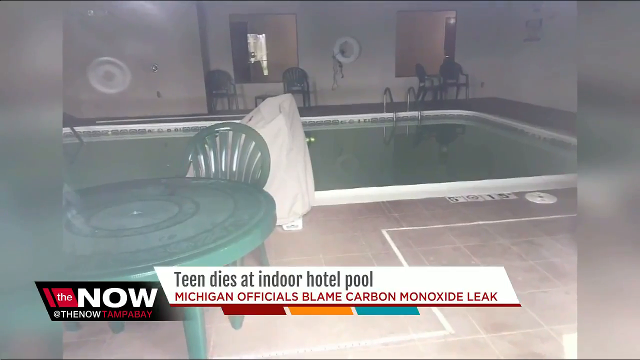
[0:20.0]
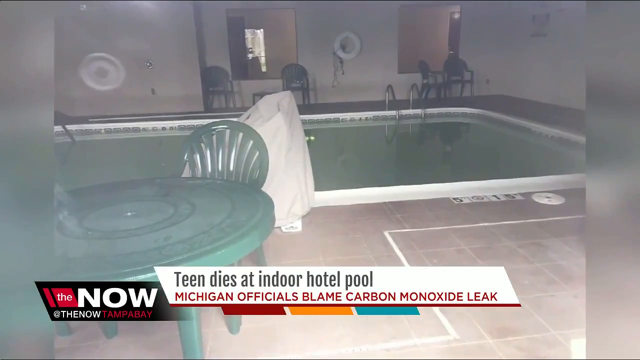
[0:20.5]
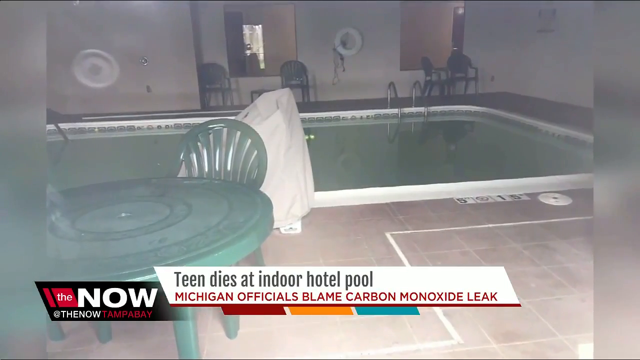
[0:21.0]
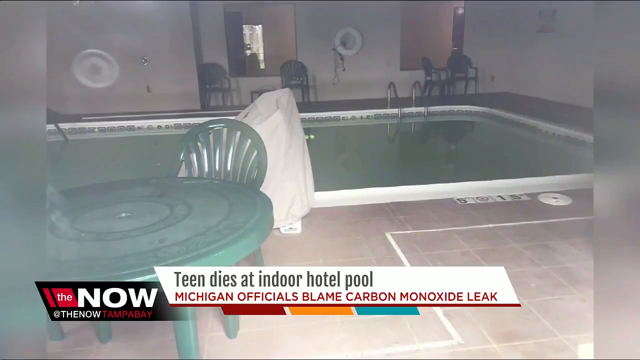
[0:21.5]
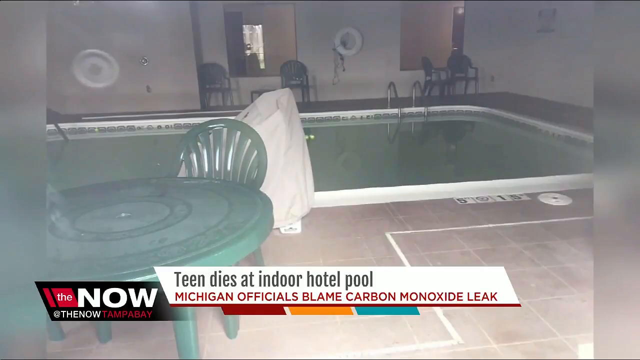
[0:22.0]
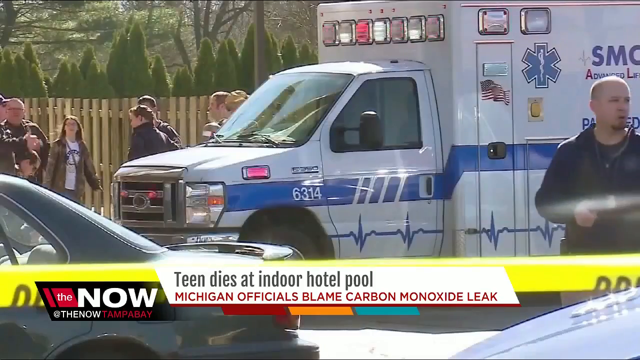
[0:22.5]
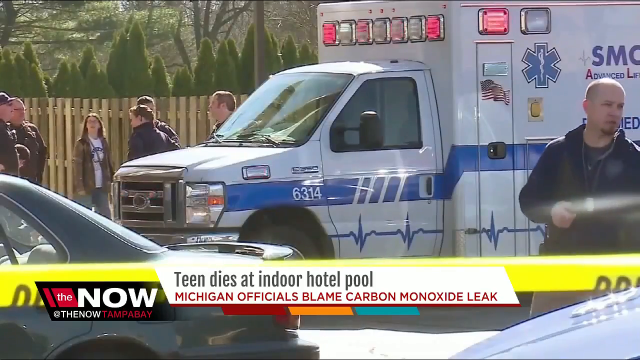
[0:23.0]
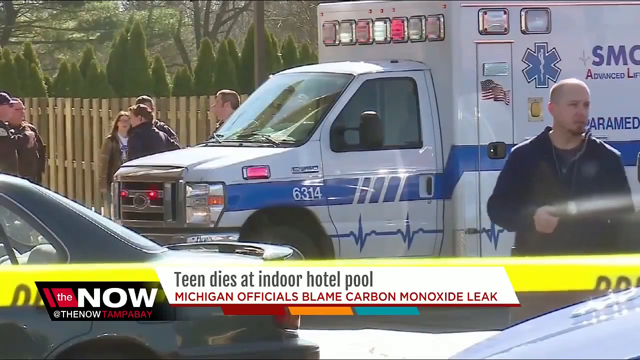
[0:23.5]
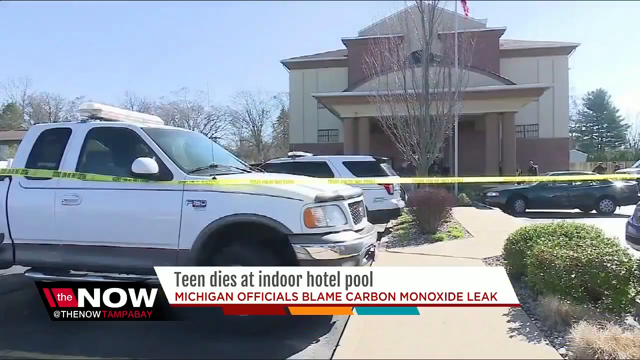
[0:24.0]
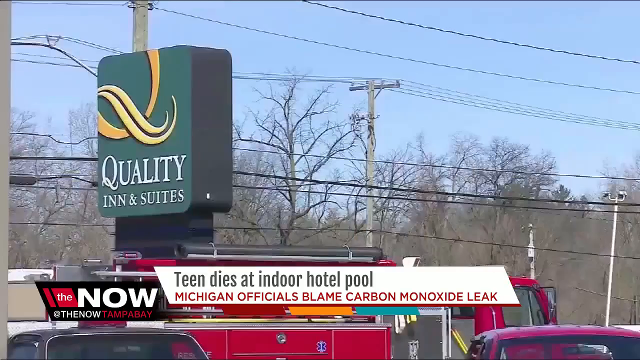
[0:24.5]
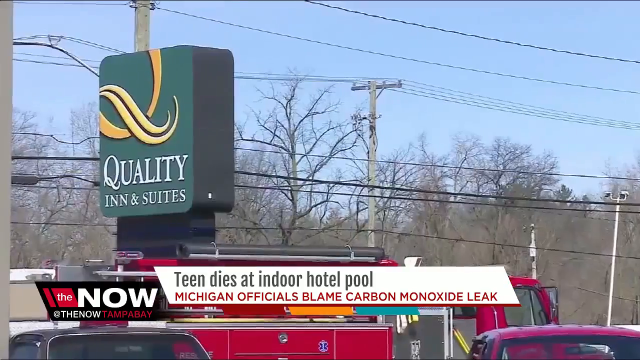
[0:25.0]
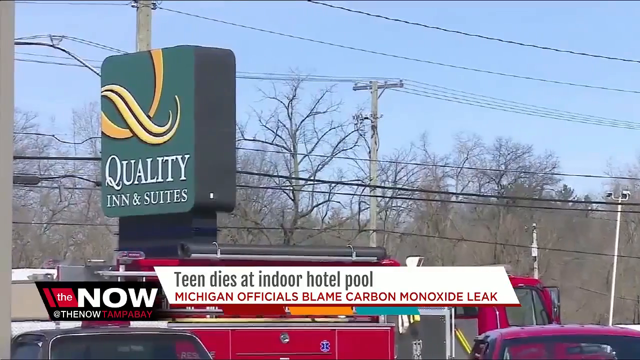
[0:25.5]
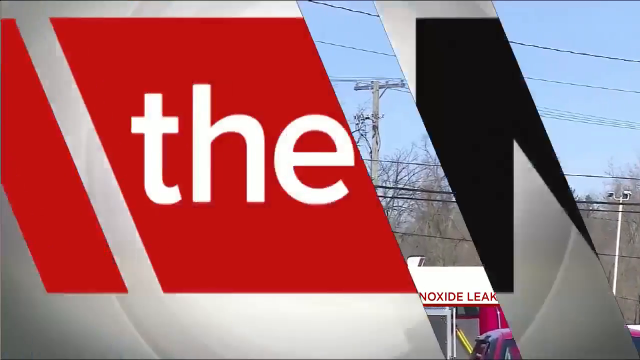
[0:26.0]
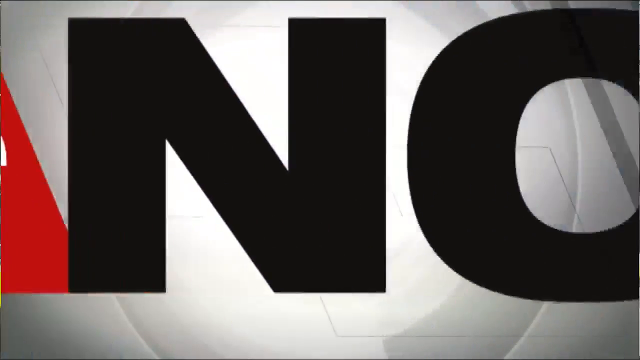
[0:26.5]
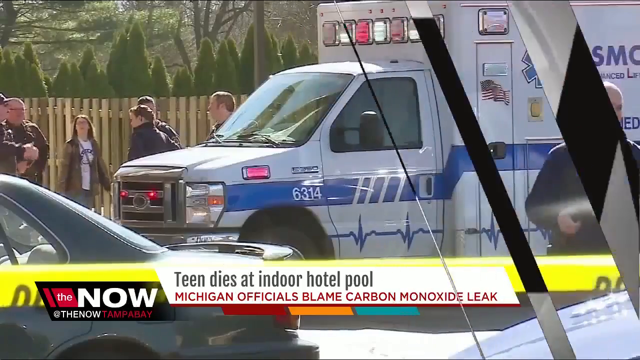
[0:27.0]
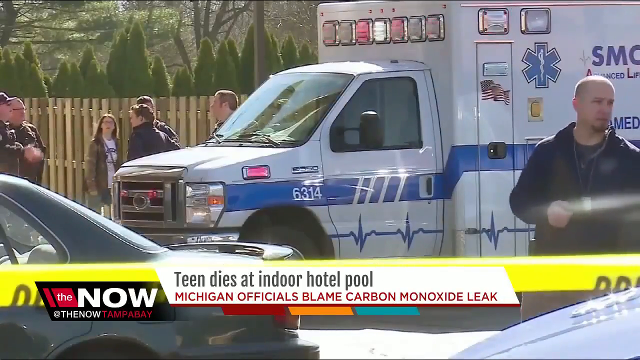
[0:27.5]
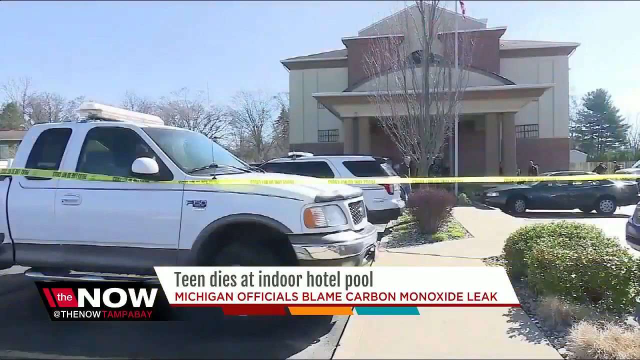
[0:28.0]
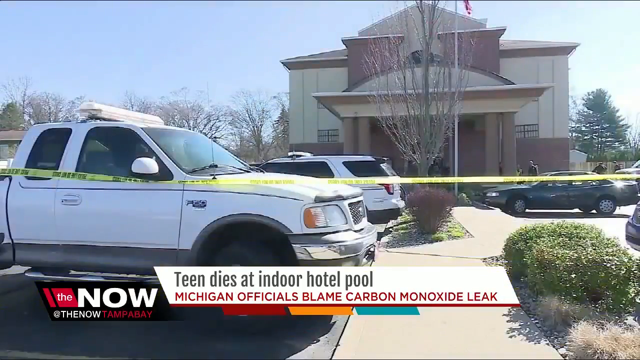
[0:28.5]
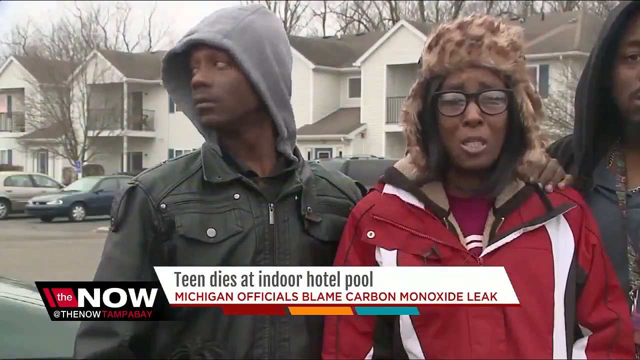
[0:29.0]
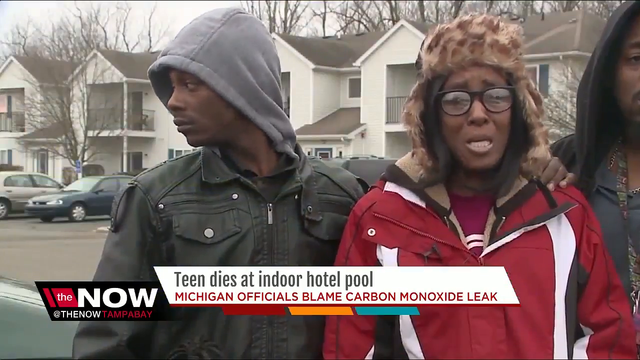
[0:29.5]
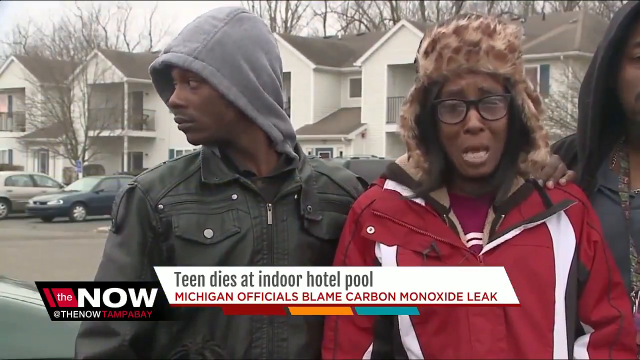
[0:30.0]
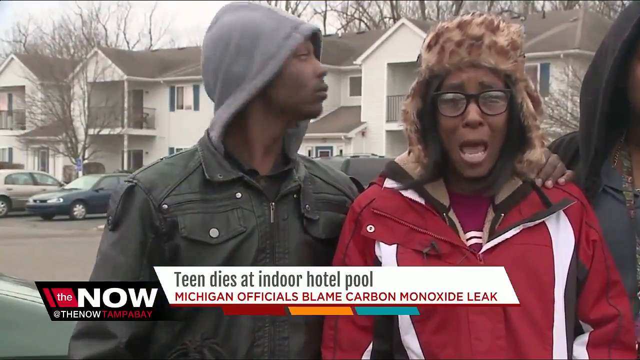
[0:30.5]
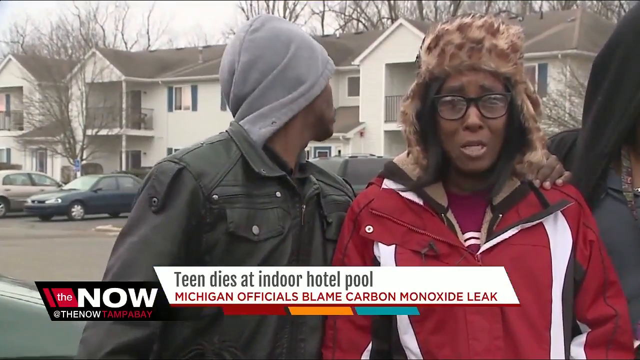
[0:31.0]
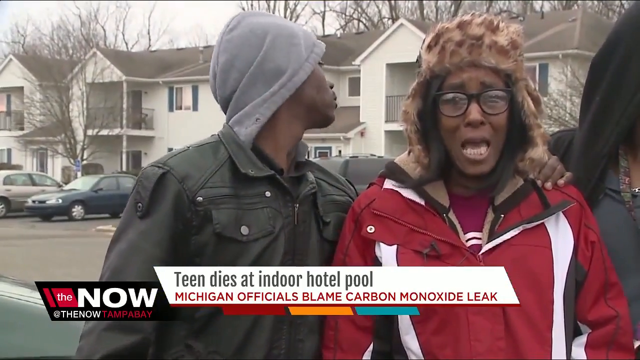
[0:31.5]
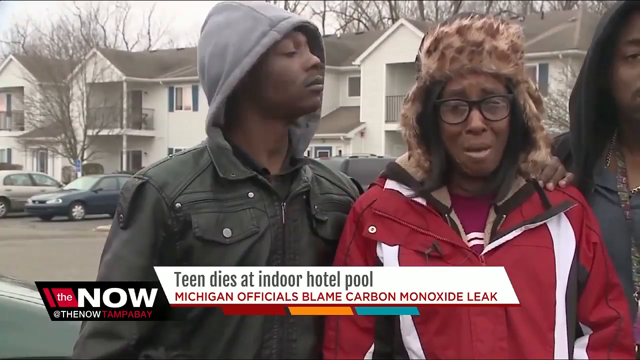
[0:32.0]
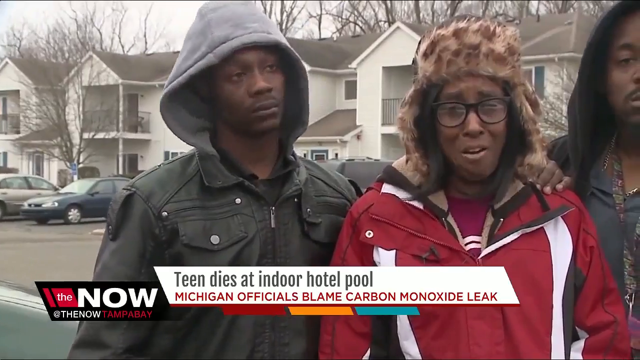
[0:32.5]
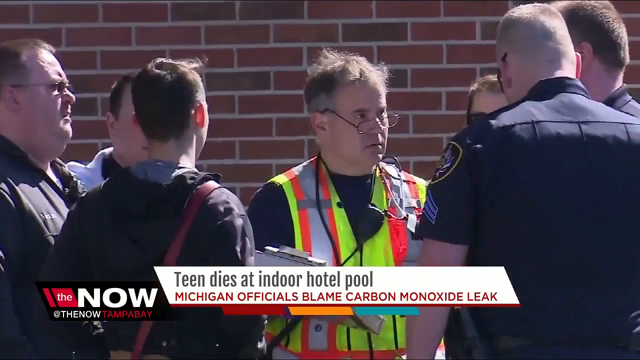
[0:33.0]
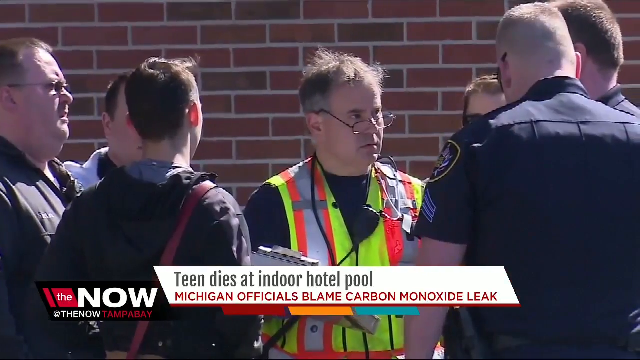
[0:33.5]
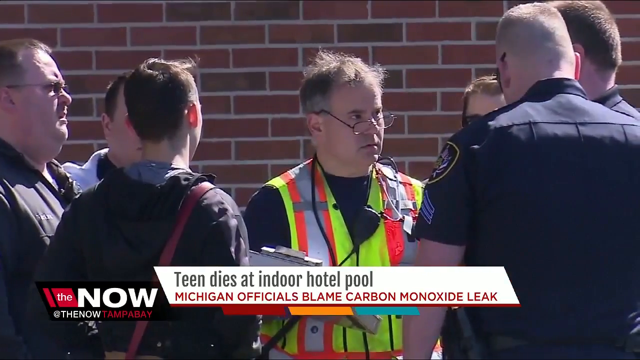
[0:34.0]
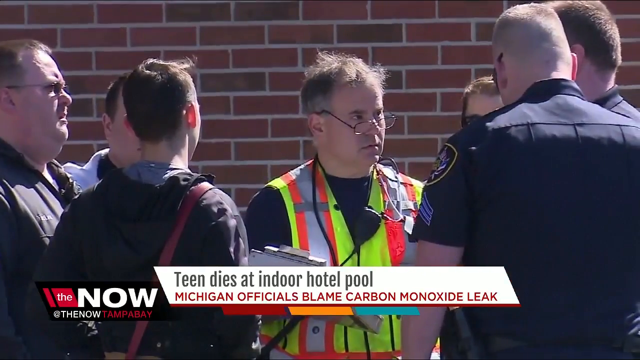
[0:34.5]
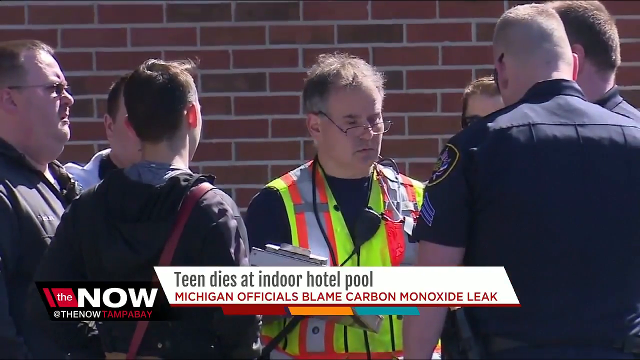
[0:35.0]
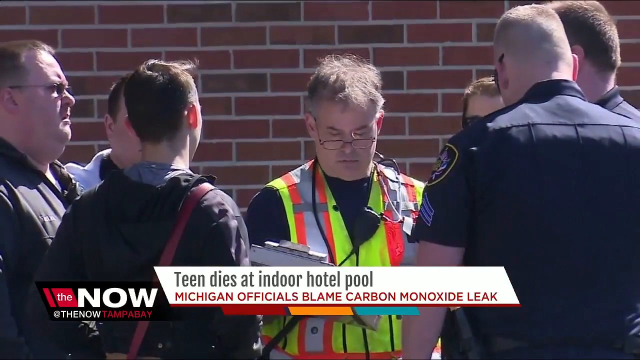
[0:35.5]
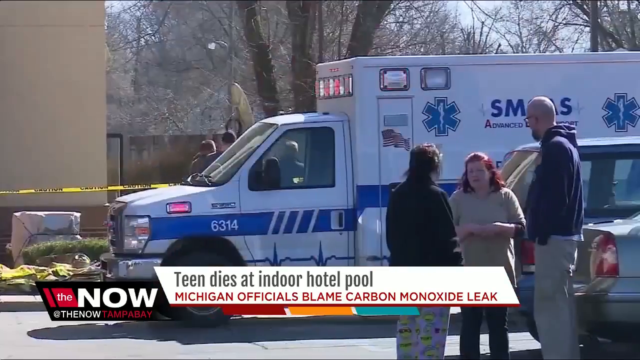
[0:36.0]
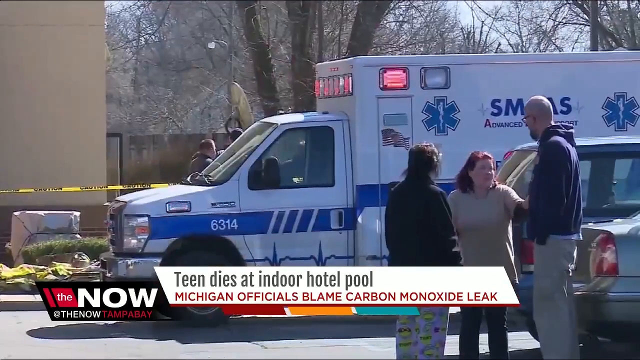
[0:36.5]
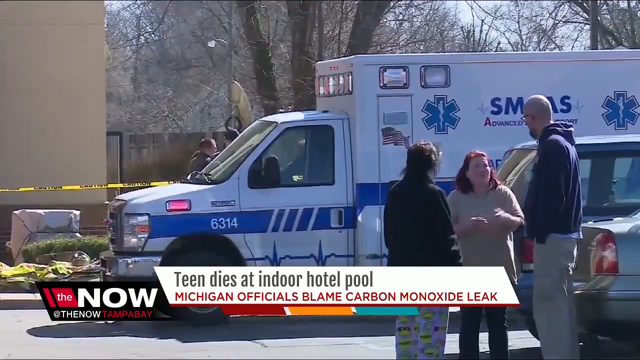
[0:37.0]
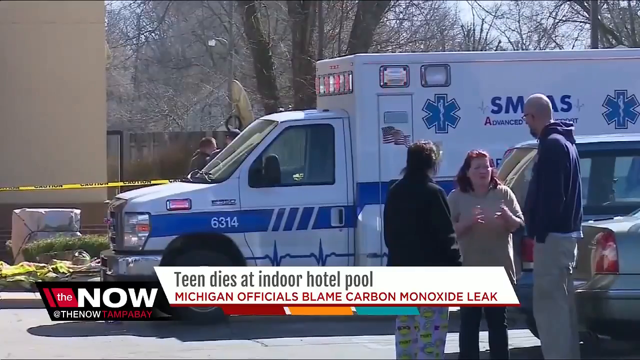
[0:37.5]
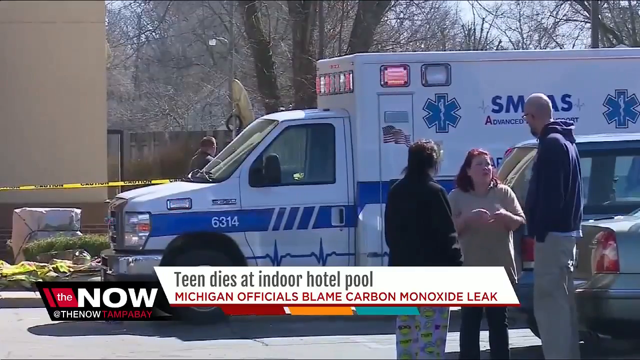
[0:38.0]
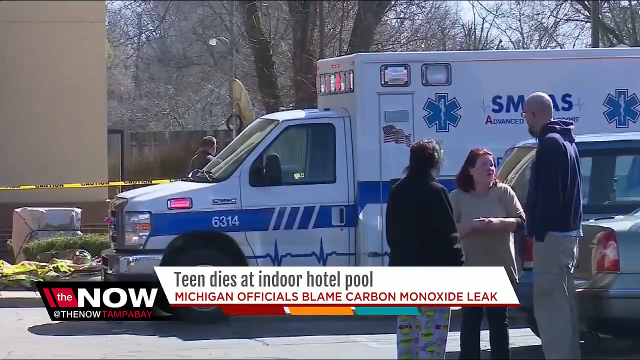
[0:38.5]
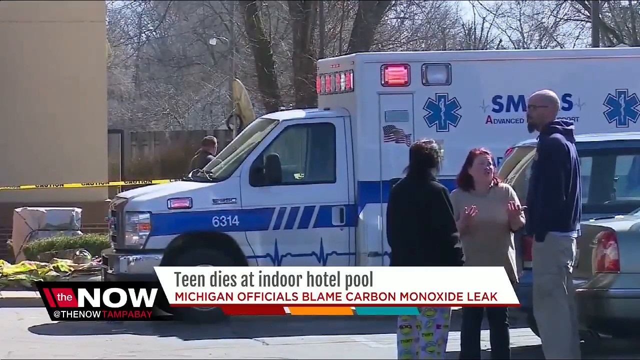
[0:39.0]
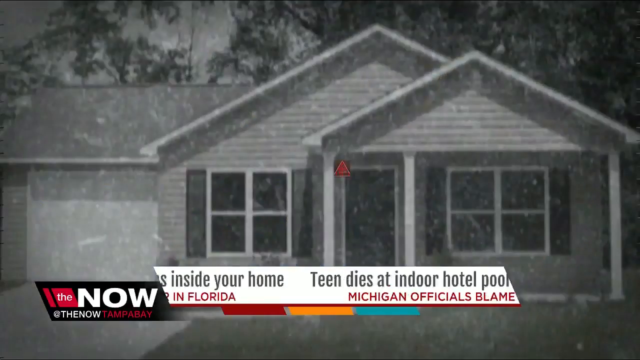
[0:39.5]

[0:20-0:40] A pool with a white barrier around it and grayish flooring is shown. A green plastic table and chairs are on the left, with a white towel over what is possibly a white chair just behind it, and more green chairs off in the background. There appear to be two mirrors on the left and right sides, and a white tube hangs on a white wall. The water is a bit green, and clear metal poles for entering the pool can be made out on the right side. The caption at the bottom, in grayish lettering on a white background, reads "teen dies at indoor hotel pool", with red lettering underneath reading "Michigan officials blame carbon monoxide leak". The colouring beneath goes red, orange and teal blue. To the bottom left is a black box with a red box inside holding the white word "the"; beside it, in a larger white font, is "now", with "at the now" in white below and "Tampa Bay" in red beside it. The next scene shows a white and blue striped ambulance with six people in the background. Behind them is a brown picket fence with green trees and gray branches. A car is just off to the side of the ambulance, there is yellow police tape, and a white man in a dark blue top walks past on the right side. The scene then shifts to police vehicles, some of them white F-150 pickup trucks. In the background is a teal and brown building with two grayish columns holding up the front section. There are gray cars, green bushes, a teal concrete sidewalk in the middle, and a tree with bare brown branches, with a reddish bush in front of it. The next image shows black people talking to the cameraman, with teal houses with brown roofs behind them. The man on the left wears a green leather jacket with a gray hood over his head. The woman in the center wears a red coat over a burgundy top, a brown hat and black-rimmed glasses. The man to her right wears a black hoodie with a gray shirt. The next image shows seven people, mostly paramedics and police, all white with short brown hair. Most wear dark blue short-sleeved shirts and some wear long-sleeved black coats; behind them is a red and white brick wall. Another image shows three white people on the right side, two of them behind the white and blue striped ambulance.